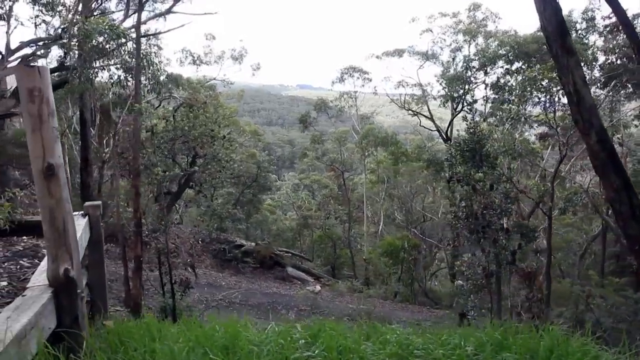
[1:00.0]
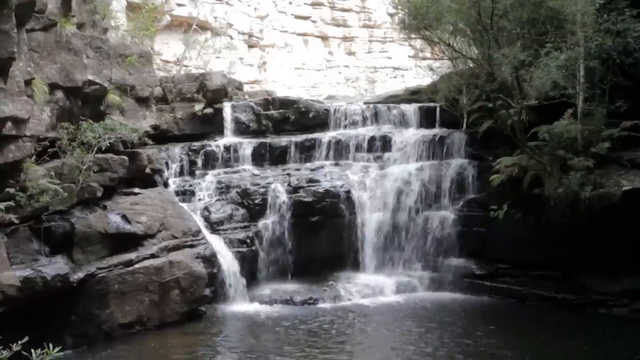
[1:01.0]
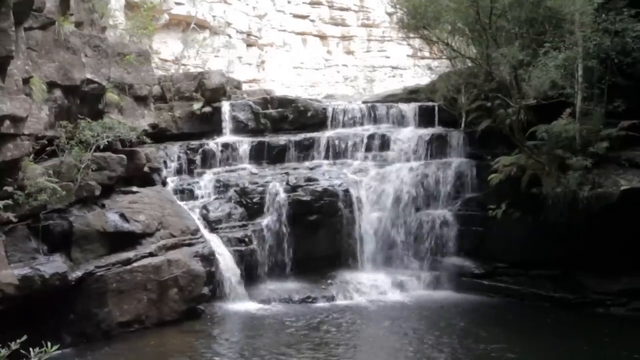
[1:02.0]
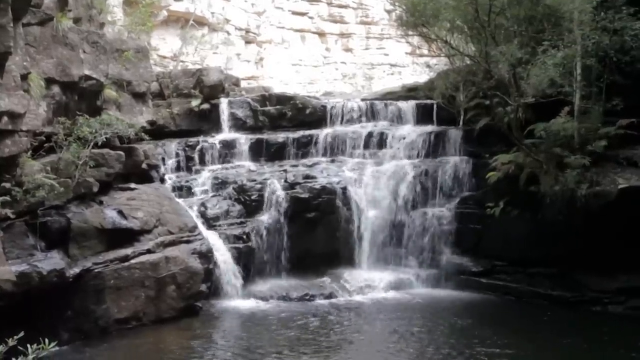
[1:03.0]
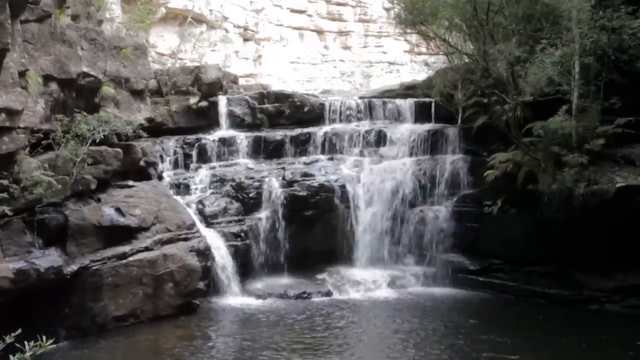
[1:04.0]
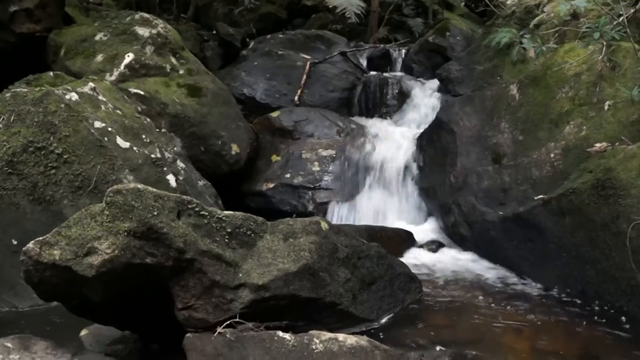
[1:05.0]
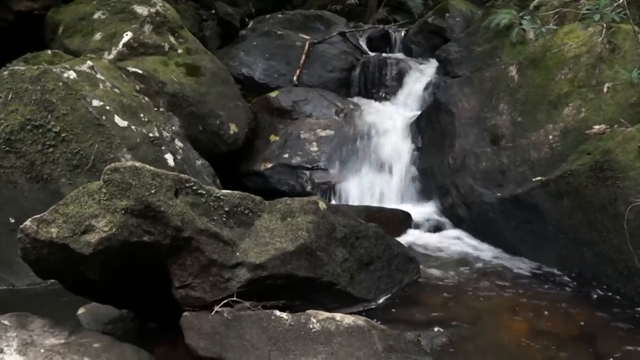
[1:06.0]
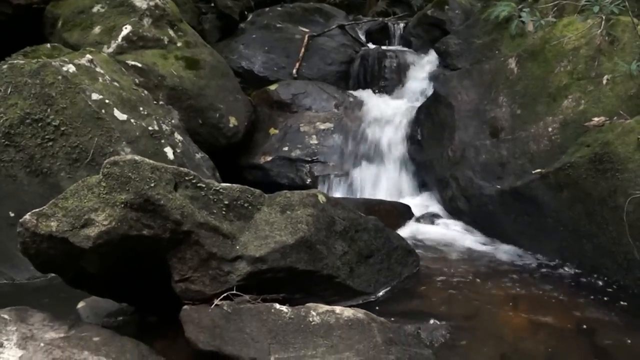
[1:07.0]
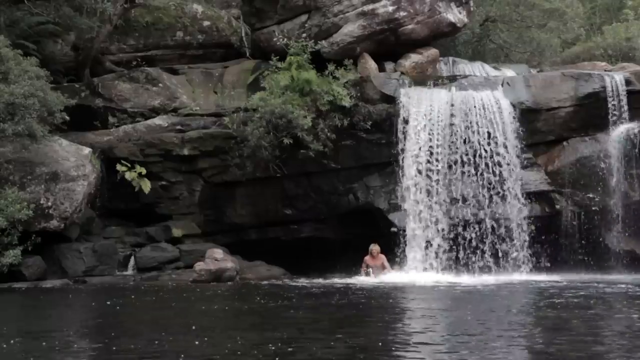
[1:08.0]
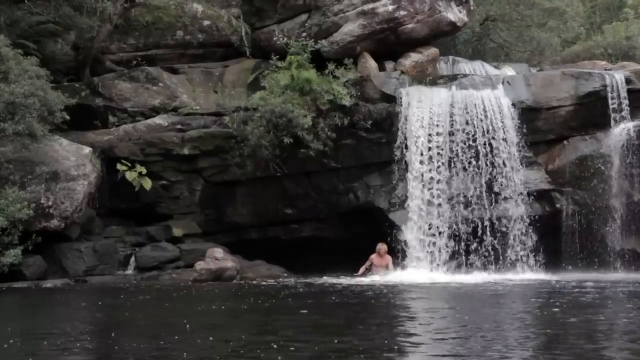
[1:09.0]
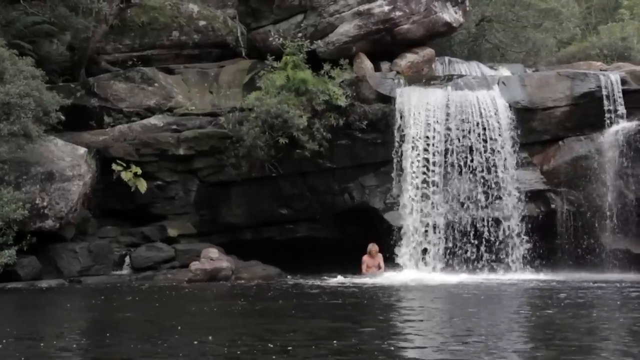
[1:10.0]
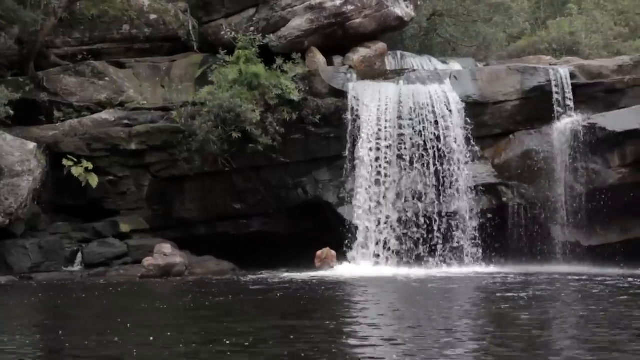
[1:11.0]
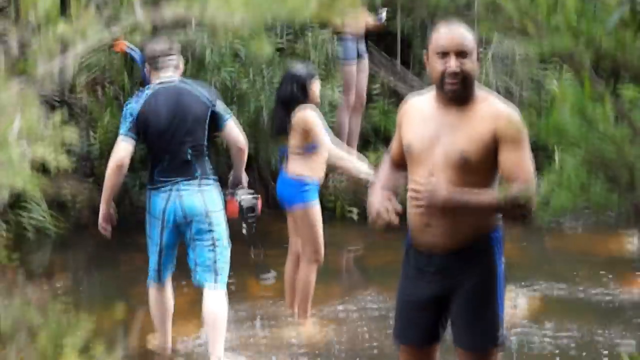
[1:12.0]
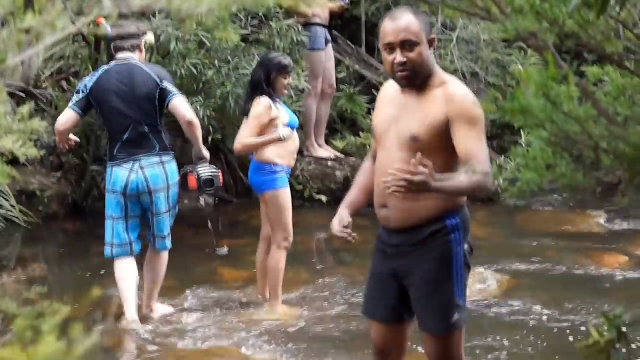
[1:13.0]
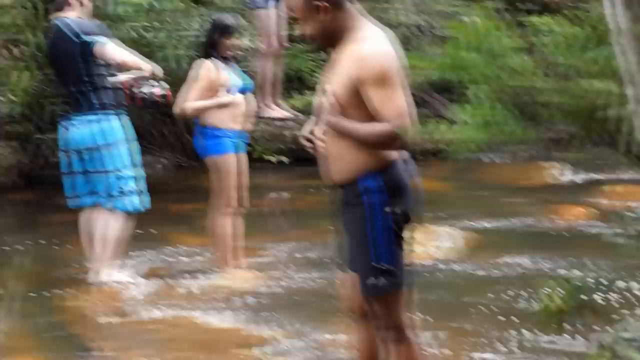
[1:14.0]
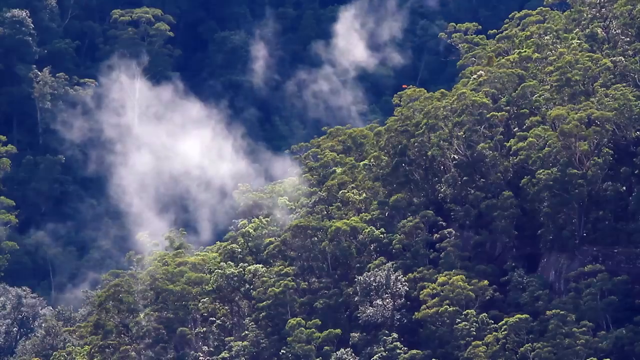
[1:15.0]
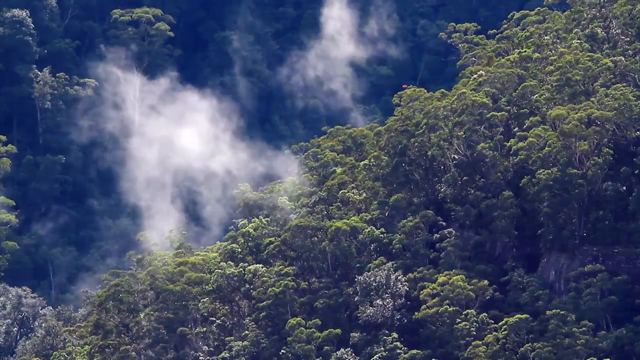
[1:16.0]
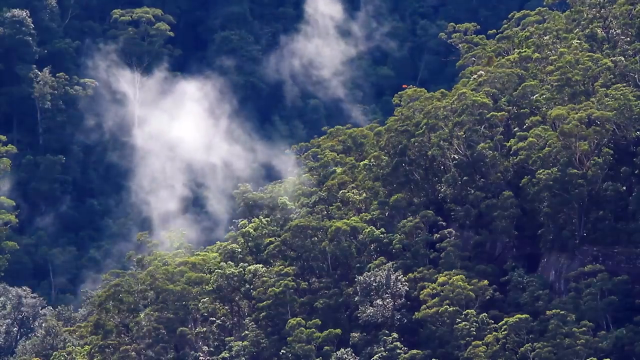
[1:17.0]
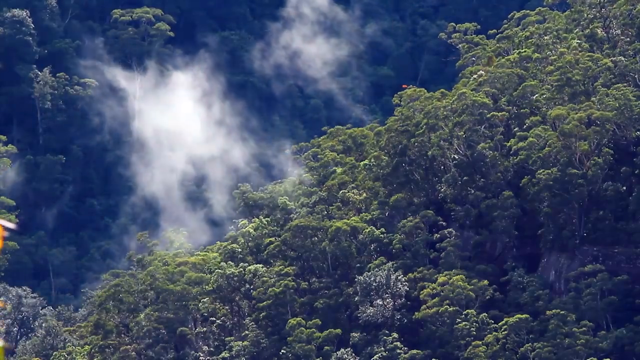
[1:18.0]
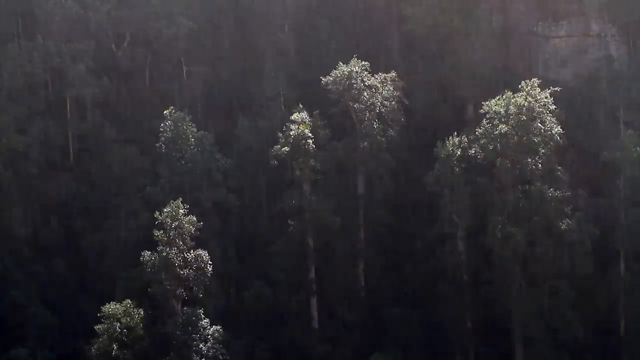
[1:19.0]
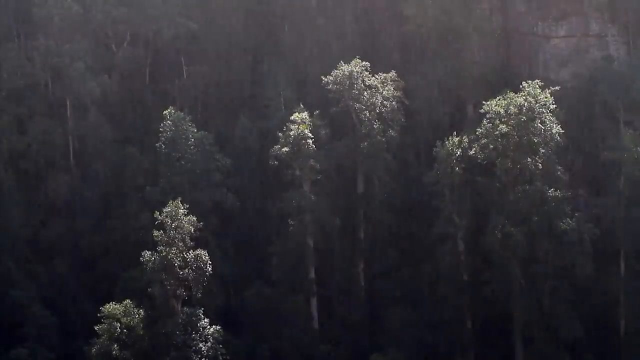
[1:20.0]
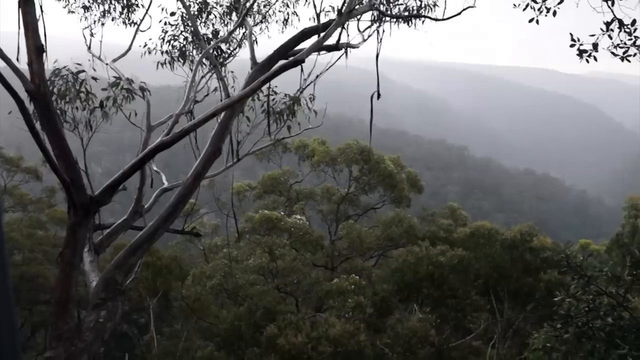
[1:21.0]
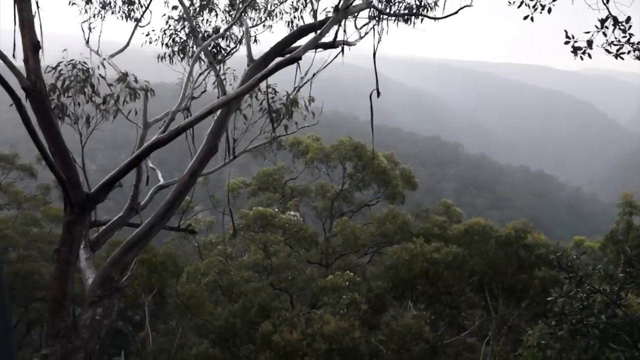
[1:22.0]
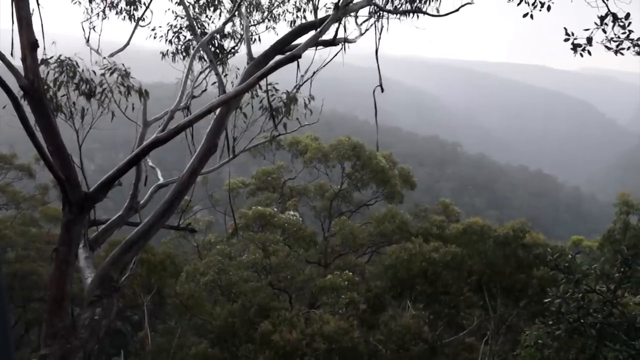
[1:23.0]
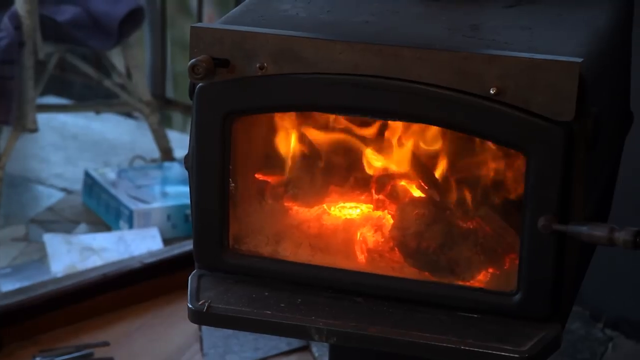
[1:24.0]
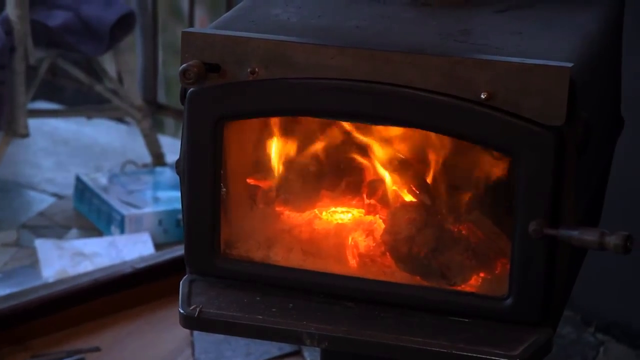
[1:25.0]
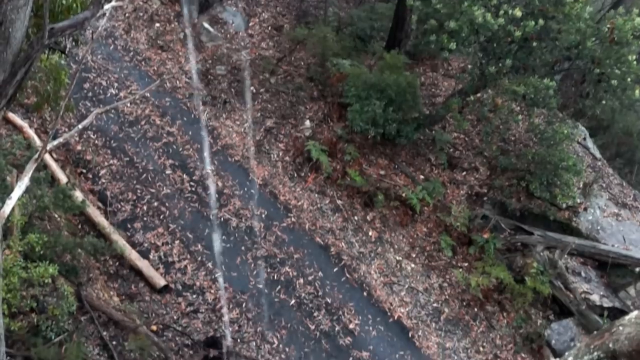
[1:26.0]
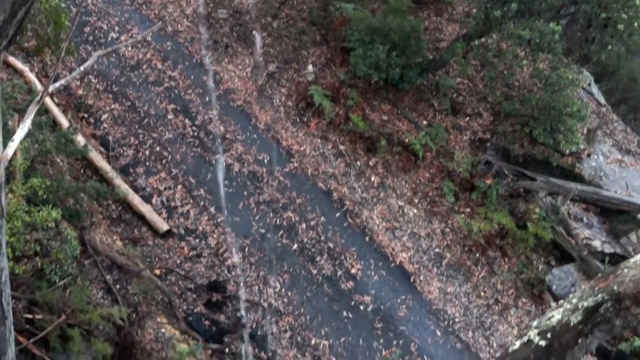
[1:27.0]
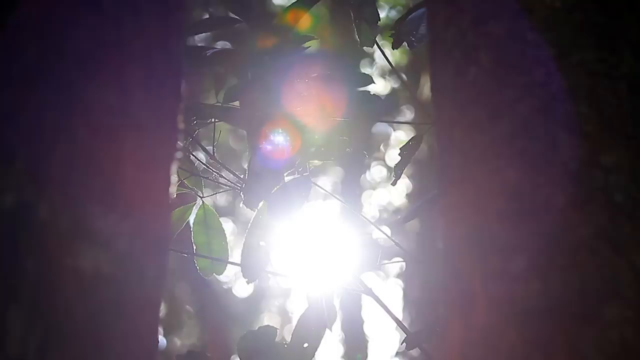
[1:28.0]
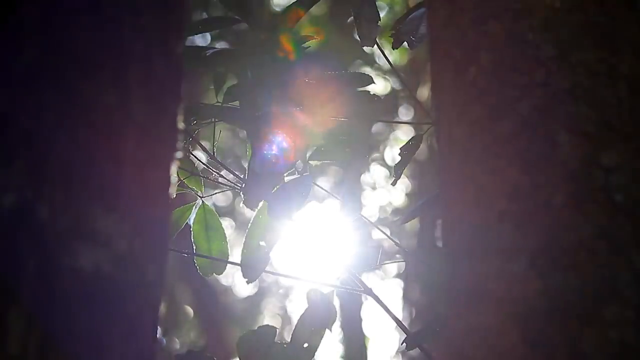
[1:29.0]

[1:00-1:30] Outdoors, what look like tiny waterfalls run off the end of possibly a small stream, with water flowing down the rocks. More water comes down a couple of rocks, with moss growing on the sides of some of them. A larger waterfall appears, and the man from earlier, with no shirt on, is in the background behind one of the waterfalls. He splashes water, then tilts his head down and puts his head into the water to get his hair wet. The video cuts to four people standing in shallow water. A man in the foreground, shirtless and wearing blue trunks, looks toward the camera. In the back, a man stands with his back to the camera, wearing brown or blue shorts, a black rash guard top and a snorkel. A woman stands in the shallow water in the middle, and in the background is a man of whom only the legs are visible, standing on a rock.